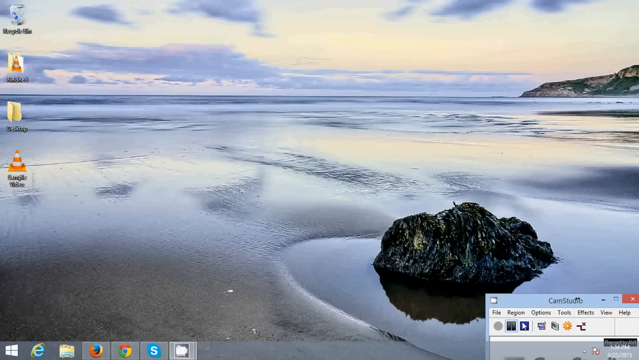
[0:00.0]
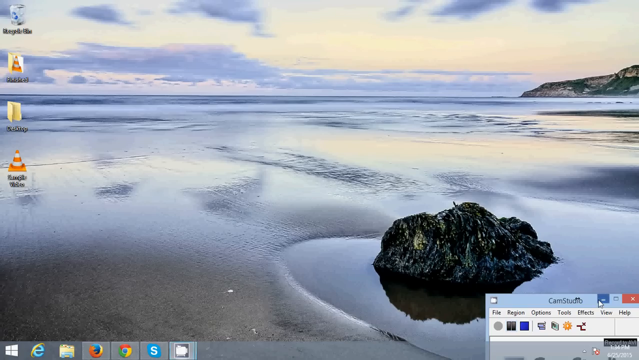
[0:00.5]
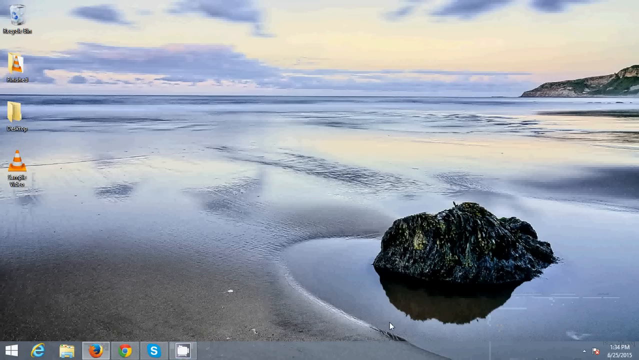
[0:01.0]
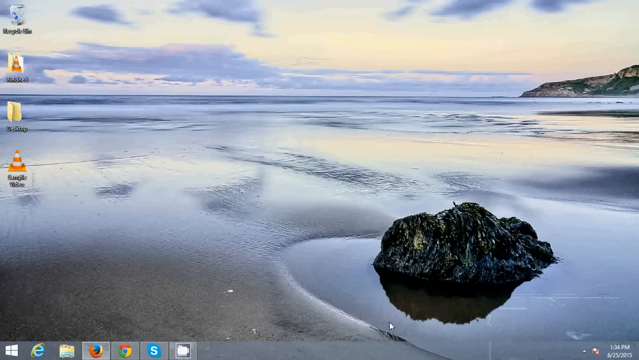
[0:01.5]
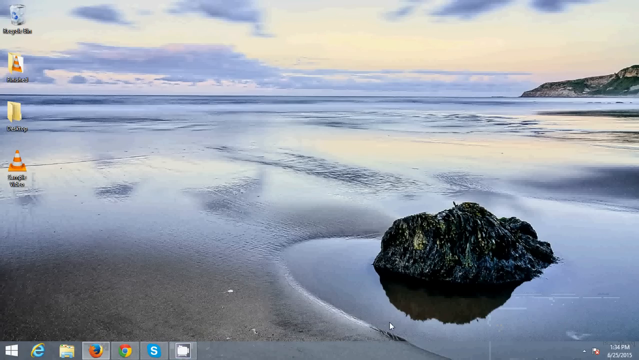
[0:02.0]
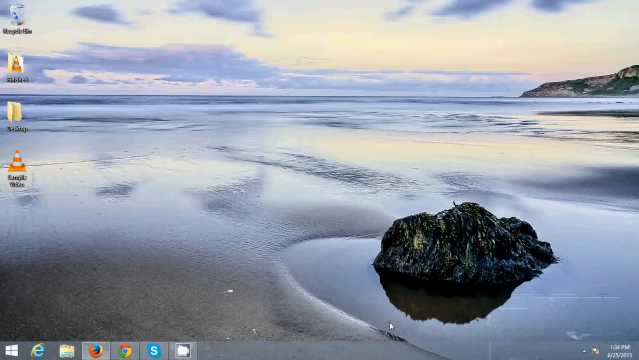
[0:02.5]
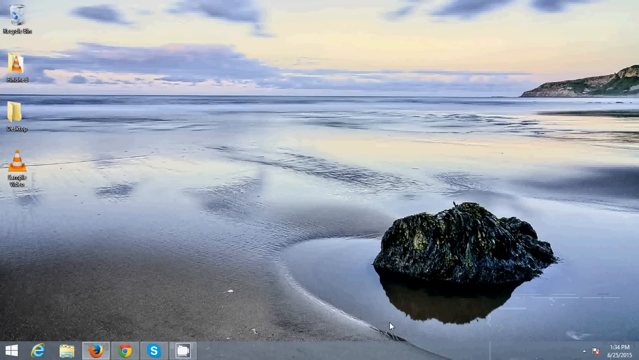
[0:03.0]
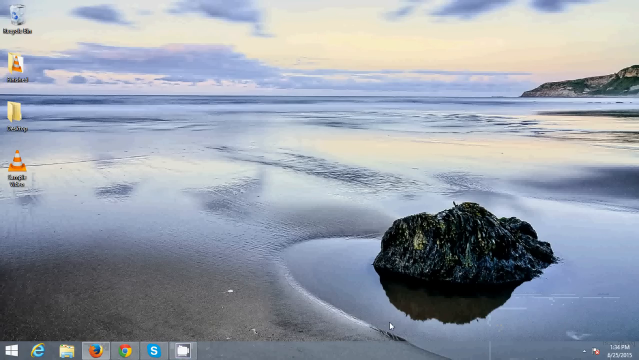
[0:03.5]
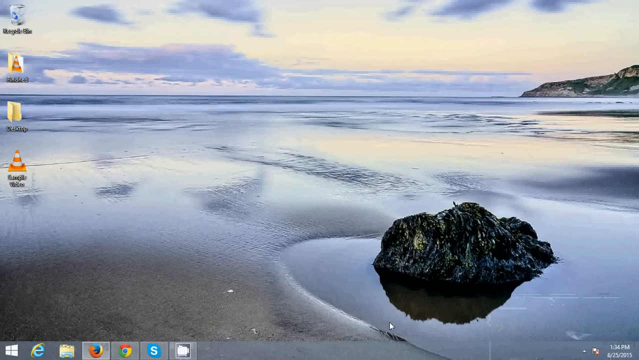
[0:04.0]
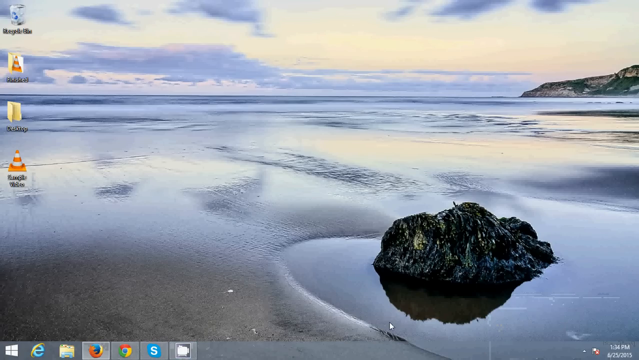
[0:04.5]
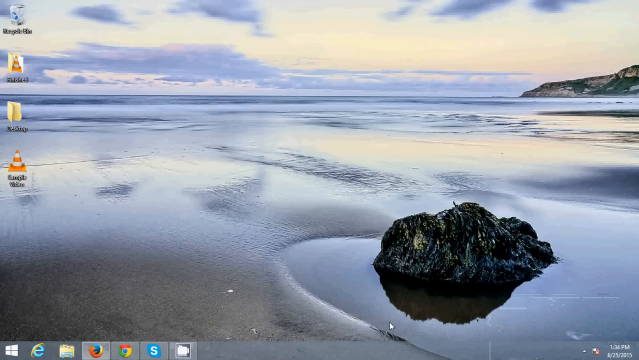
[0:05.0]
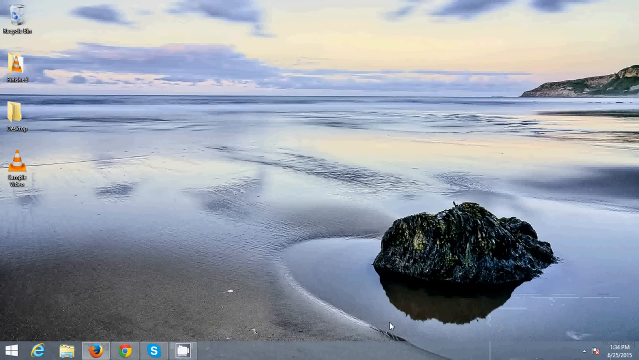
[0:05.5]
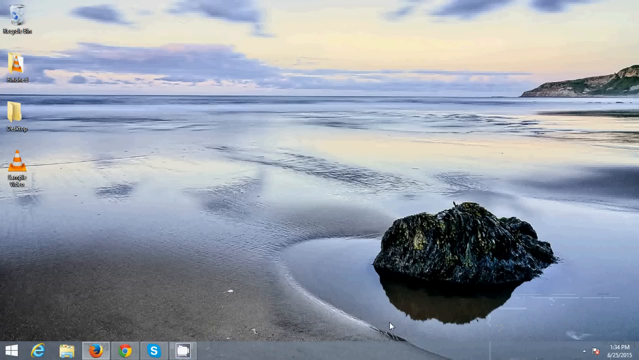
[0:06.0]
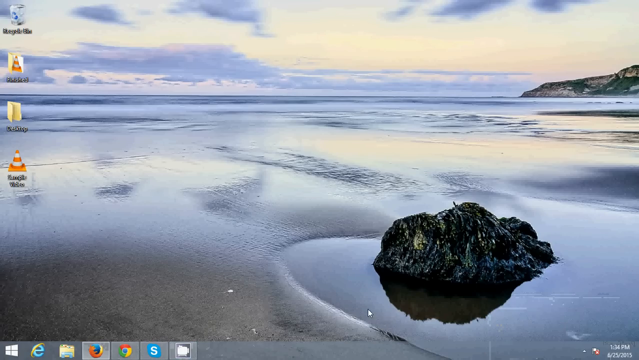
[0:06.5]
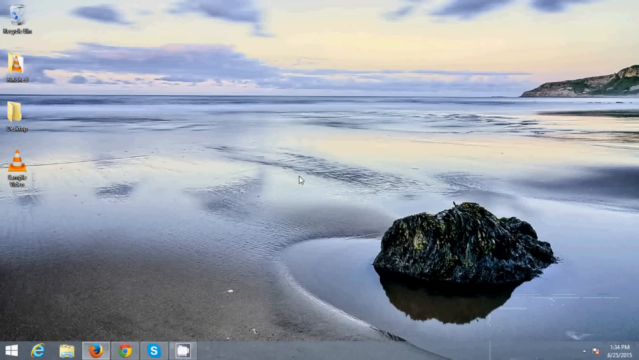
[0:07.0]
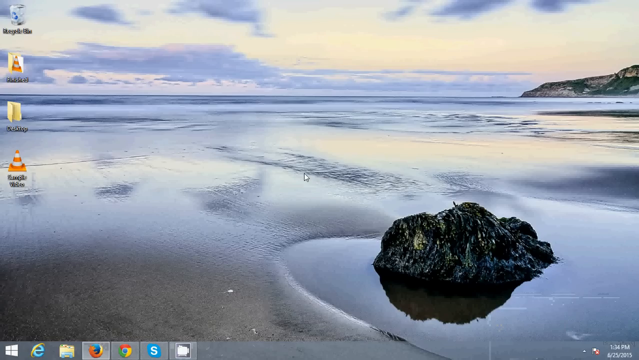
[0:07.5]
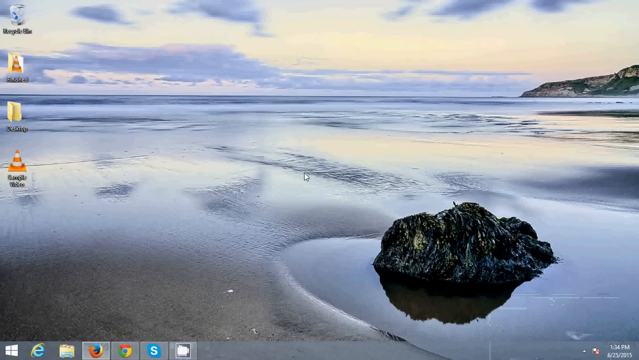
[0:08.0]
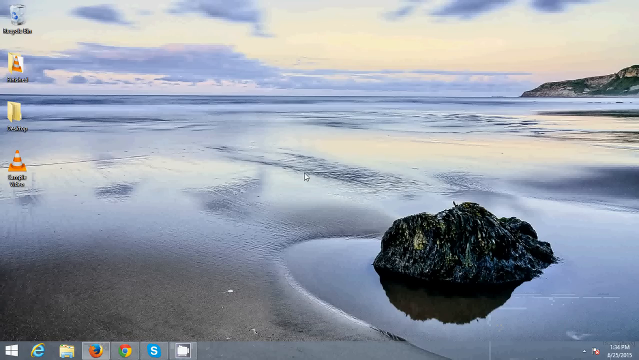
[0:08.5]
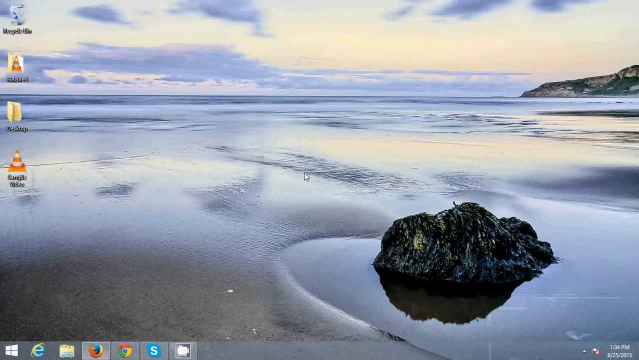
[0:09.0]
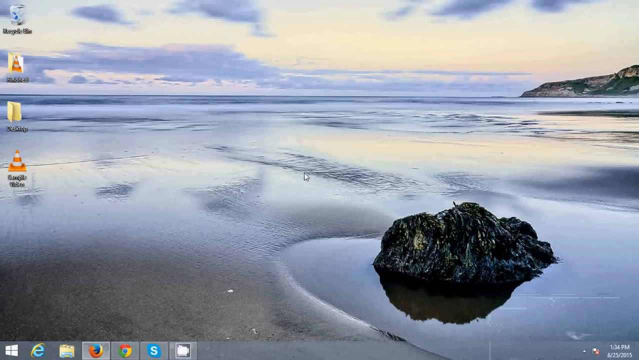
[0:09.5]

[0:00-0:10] A Windows computer desktop fills the screen with a background image of a beach where the tide looks to be out, showing sand and some small, shallow tide pools. There is a rock in the front on the right-hand side, and toward the back on the right part of an island, like a cliff face, is visible. On the left-hand side are several icons: the recycling bin and a couple of other folders, including one yellow folder, one traffic light, and a yellow folder with a traffic light in it. In the bottom right-hand side an open folder called "cam stuff" is visible, and along the bottom are the other desktop icons, such as the Windows logo.